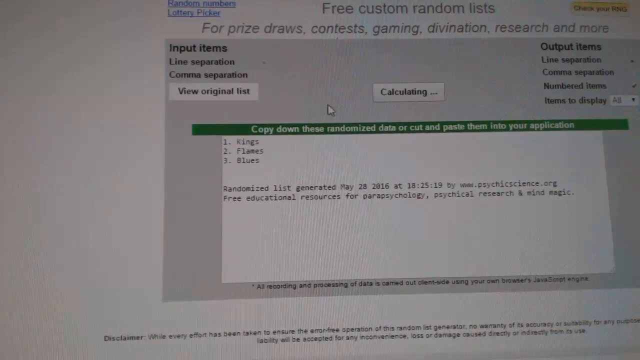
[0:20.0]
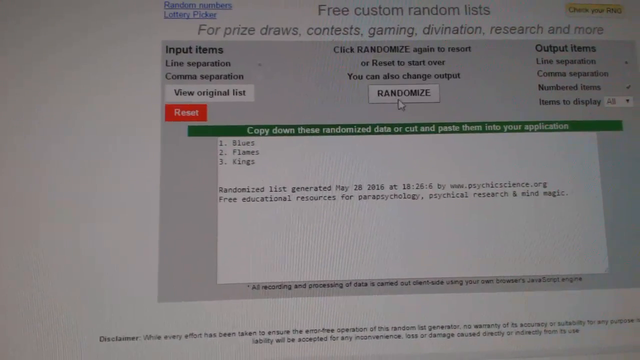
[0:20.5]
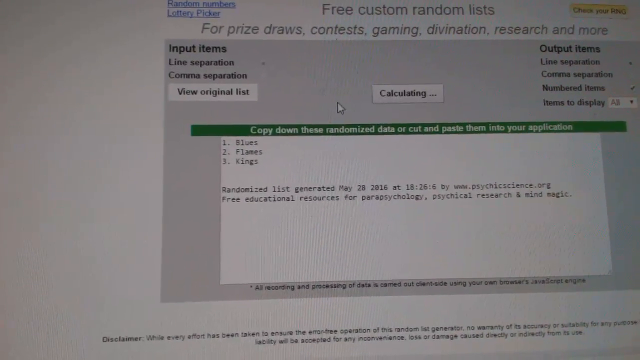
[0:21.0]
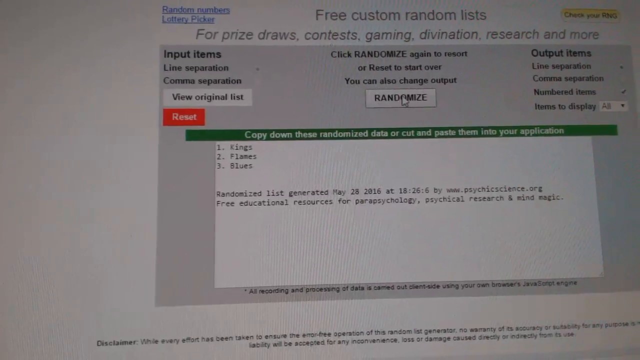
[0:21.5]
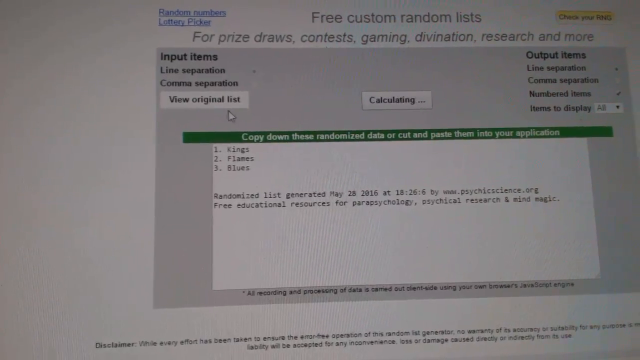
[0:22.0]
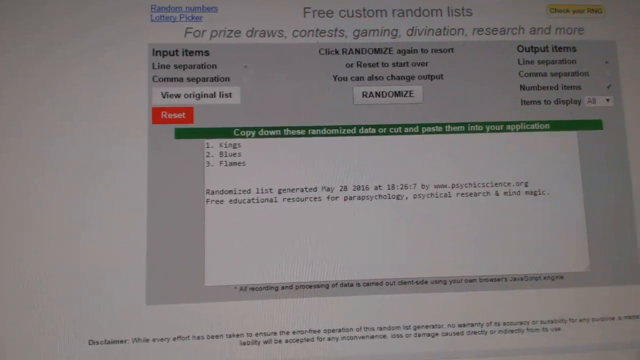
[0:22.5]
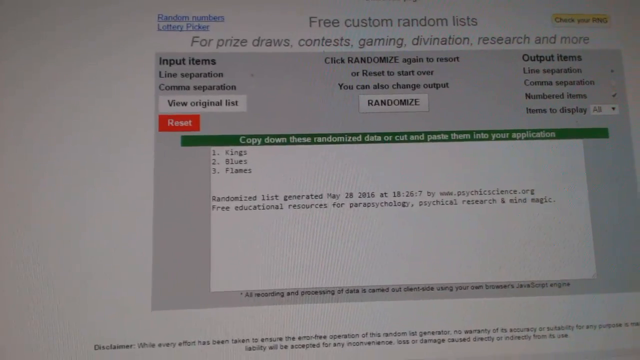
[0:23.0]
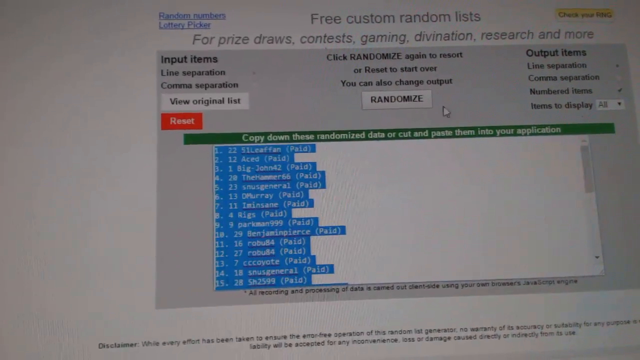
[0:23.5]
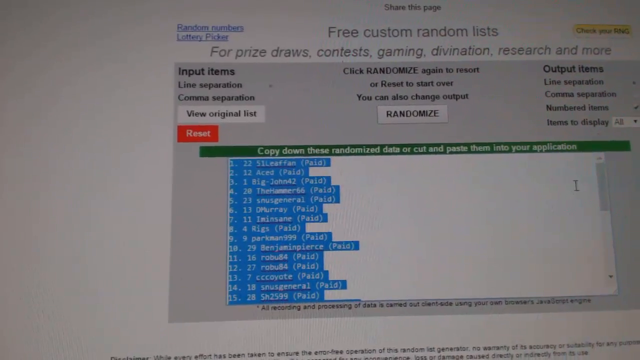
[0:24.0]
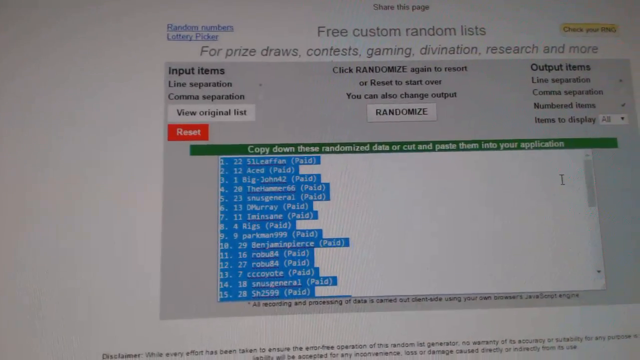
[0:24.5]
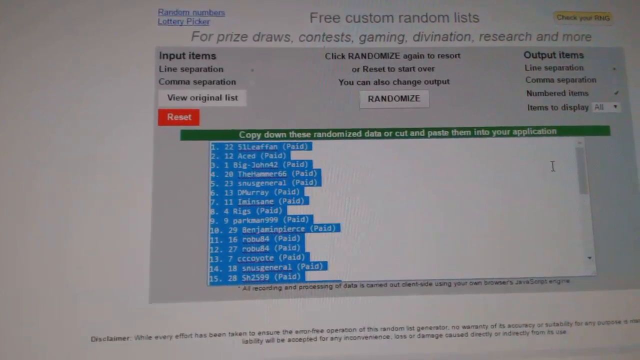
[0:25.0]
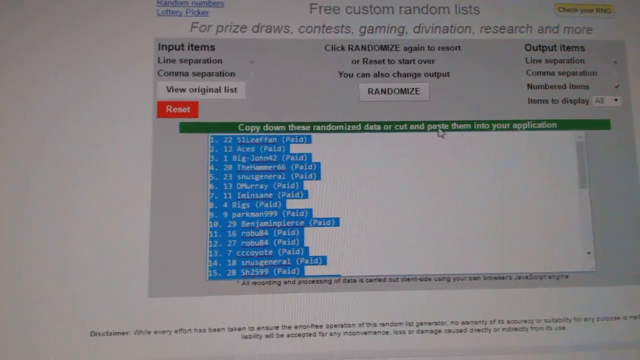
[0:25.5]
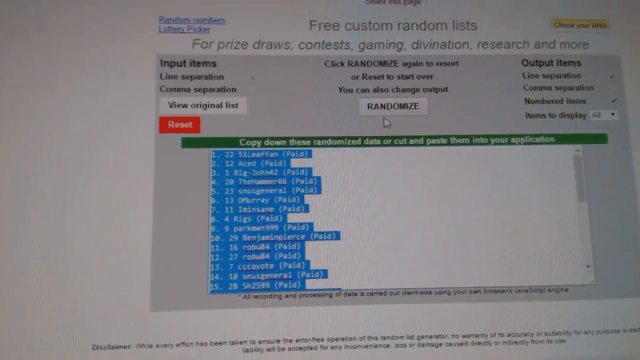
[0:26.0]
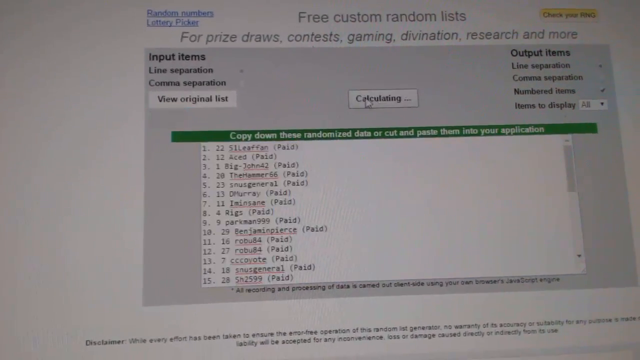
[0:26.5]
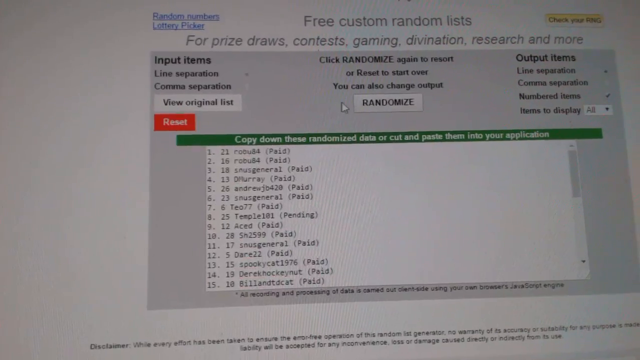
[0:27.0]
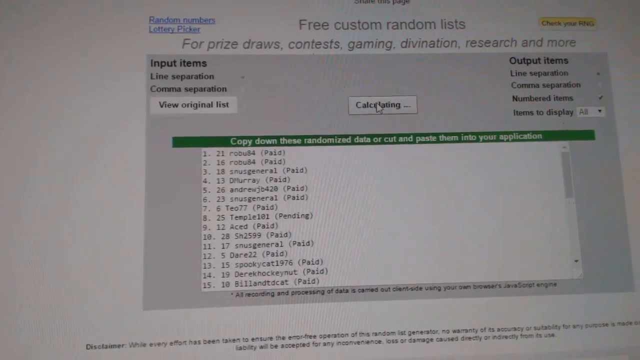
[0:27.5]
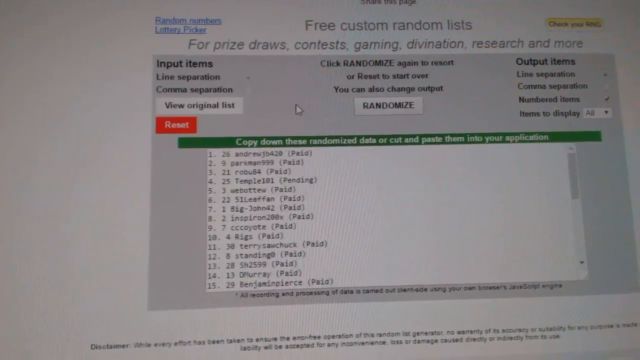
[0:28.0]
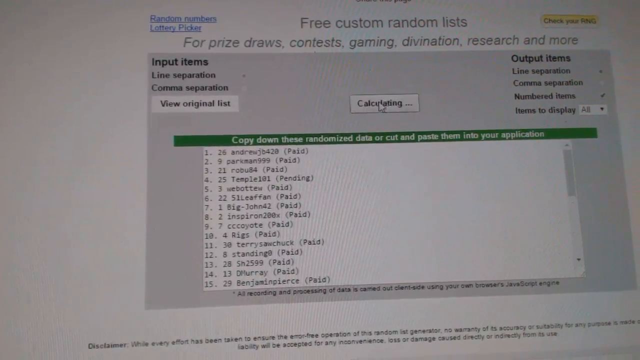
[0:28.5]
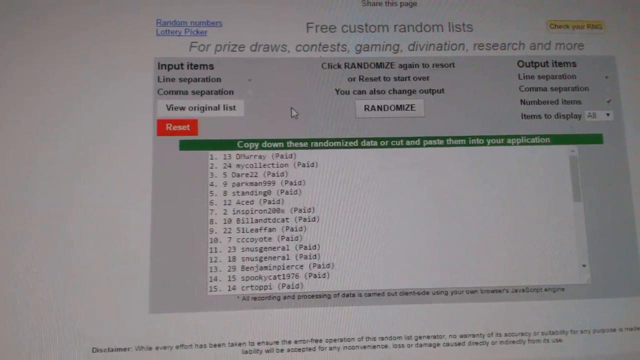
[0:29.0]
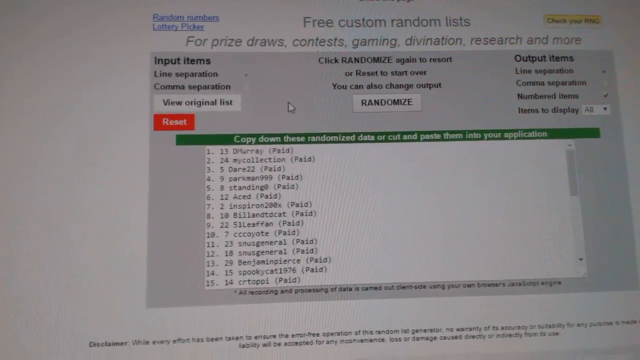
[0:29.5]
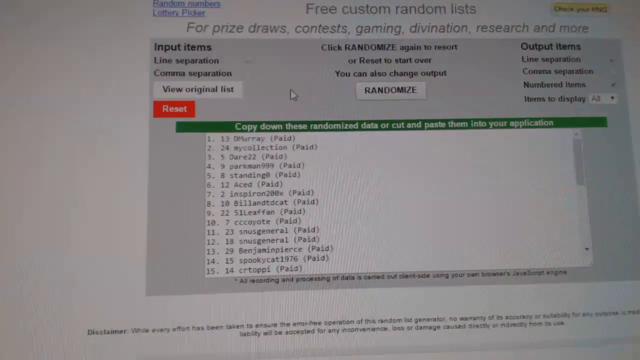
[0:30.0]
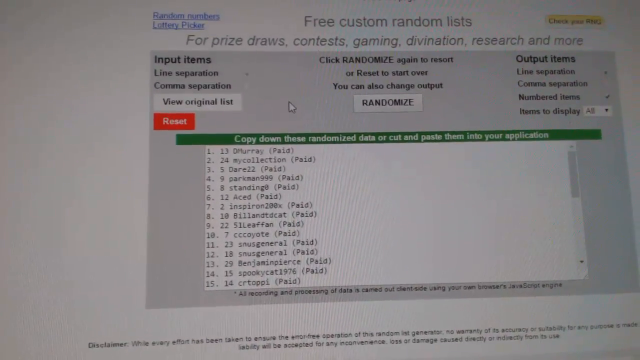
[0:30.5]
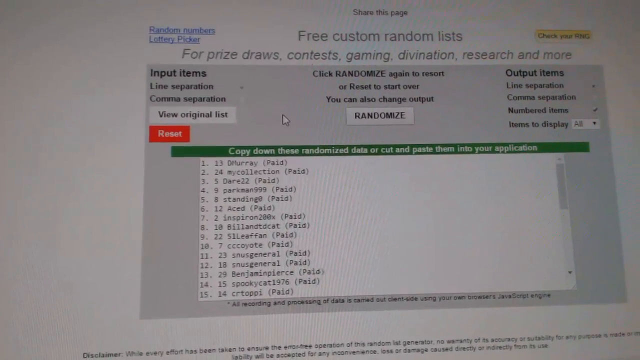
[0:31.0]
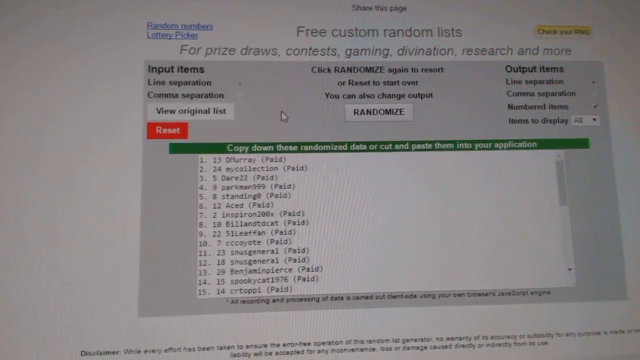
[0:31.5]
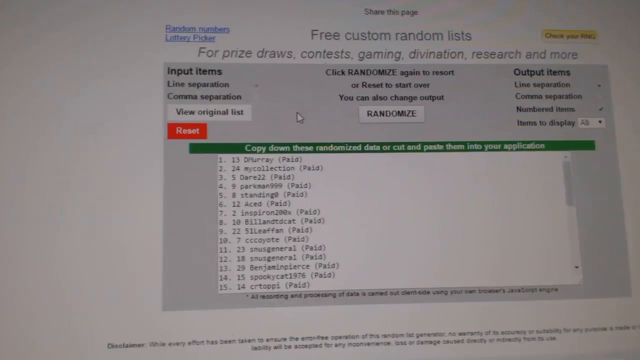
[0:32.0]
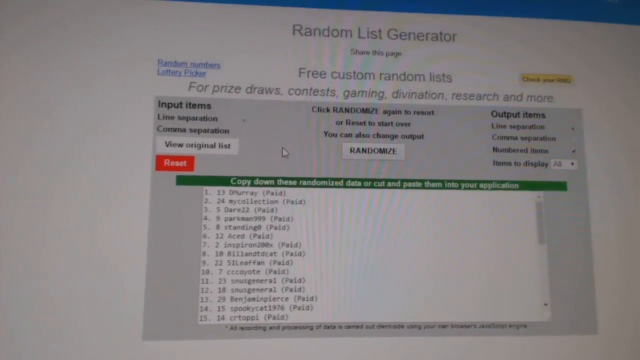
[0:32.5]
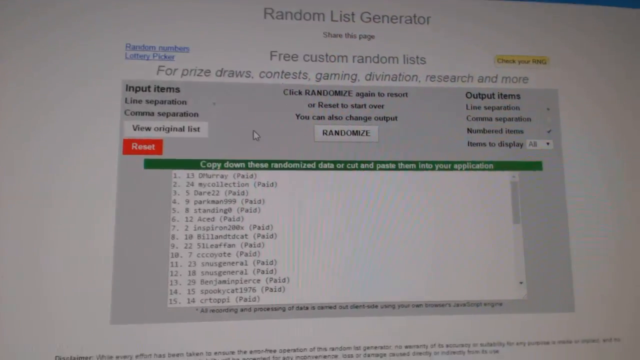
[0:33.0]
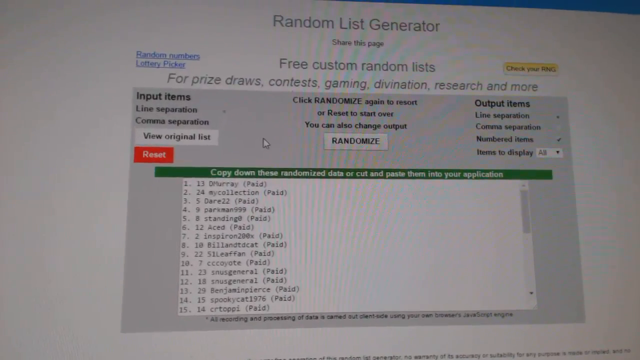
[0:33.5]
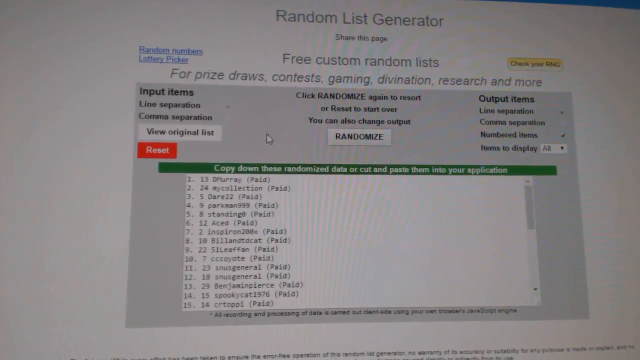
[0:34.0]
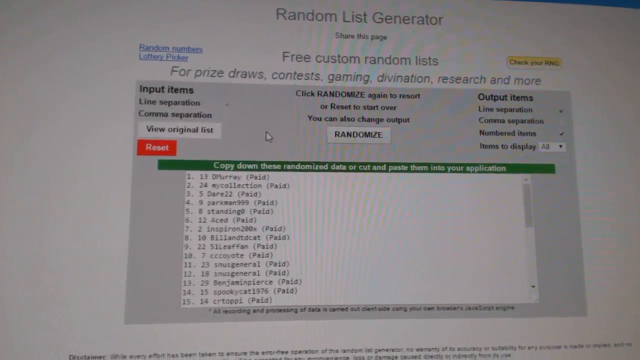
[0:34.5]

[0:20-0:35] The user continues clicking Randomize. A long list of numbers from 1 to 15 appears, which the user highlights before clicking Randomize a few more times. More of the top of the screen becomes visible, showing that the page is a random list generator. It indicates the page can be shared, with a button right below the title. To the left are two blue links for a random number generator and a lottery picker generator. To the right is a green or yellow button that apparently says "check your RNG," though it is blurry. To the right of the randomize area is an output text section labeled "output items," with options for "line separation," "comma separation," "number lists," and "items to display," which seems to read "A3." At the very end, the user has printed a 15-item list. Number one says "13, the Murray," with "paid" in brackets beside it; every entry says paid. The second says "24, my collection," and the third says "5, their 22," and the list goes on. The entries look like randomly generated usernames.